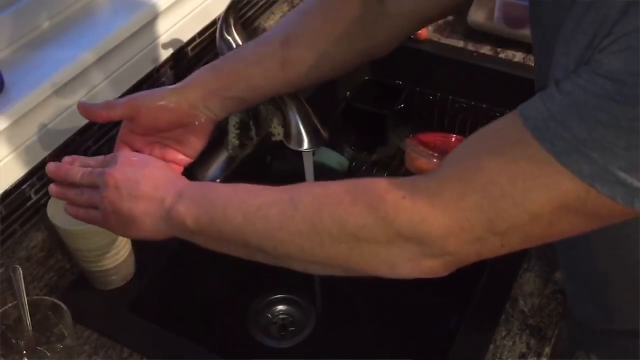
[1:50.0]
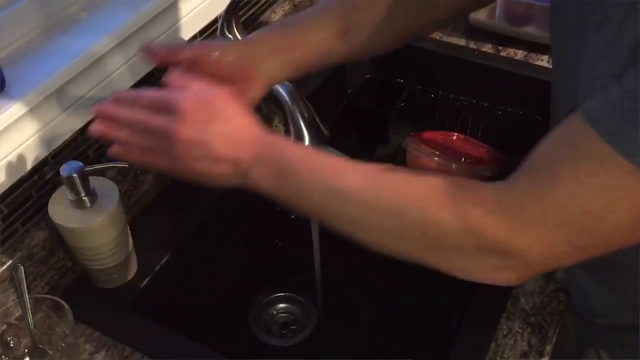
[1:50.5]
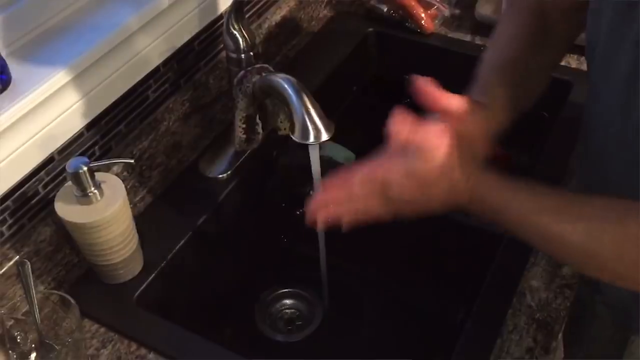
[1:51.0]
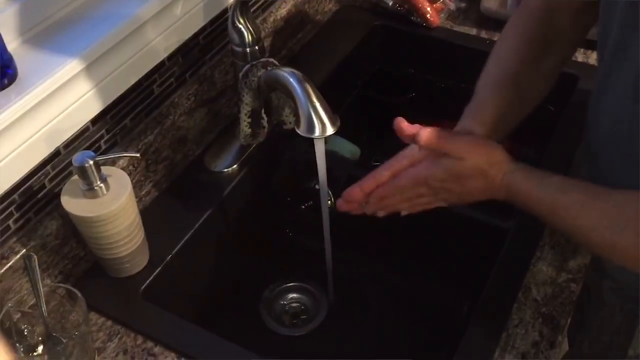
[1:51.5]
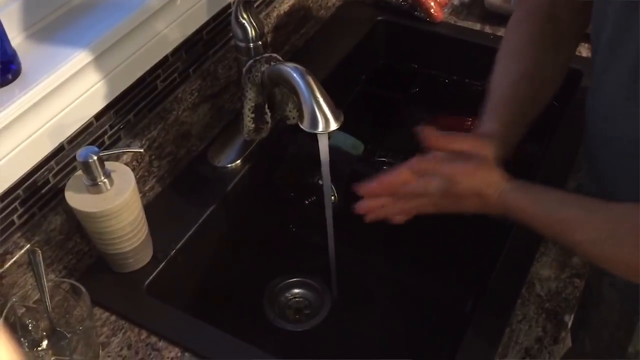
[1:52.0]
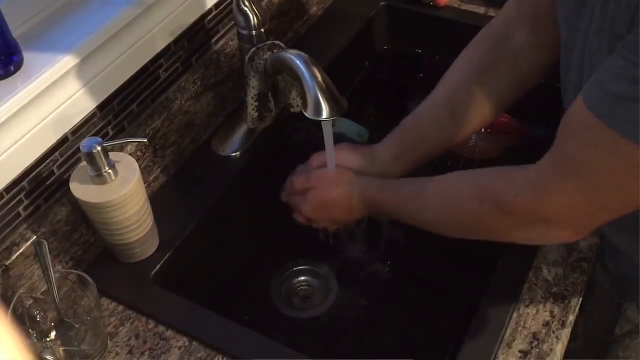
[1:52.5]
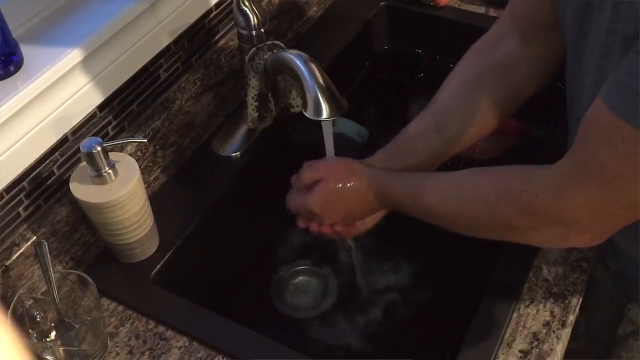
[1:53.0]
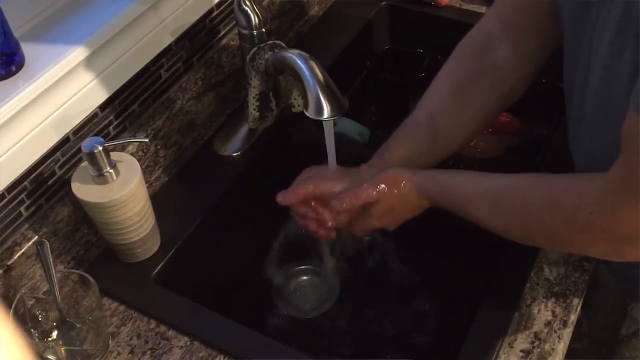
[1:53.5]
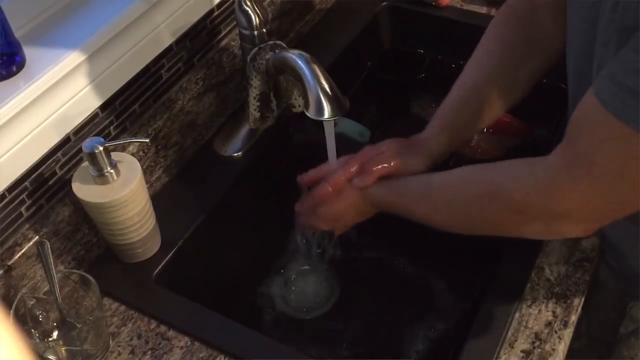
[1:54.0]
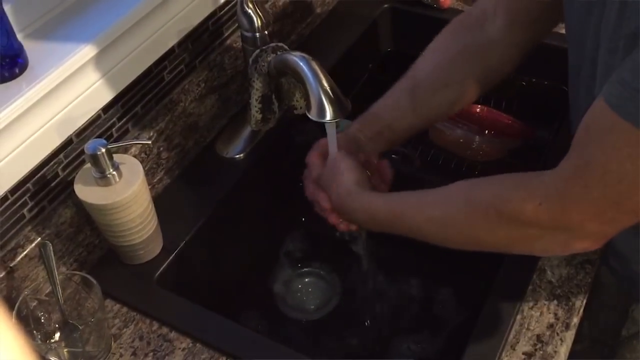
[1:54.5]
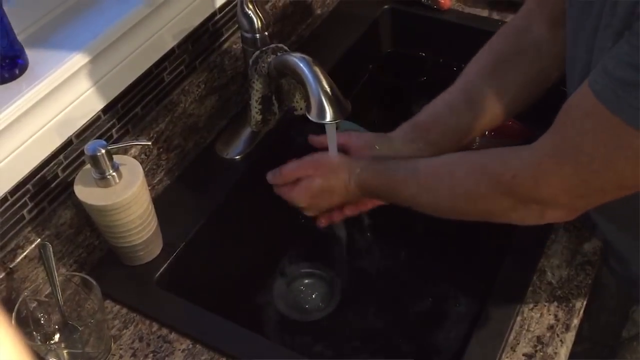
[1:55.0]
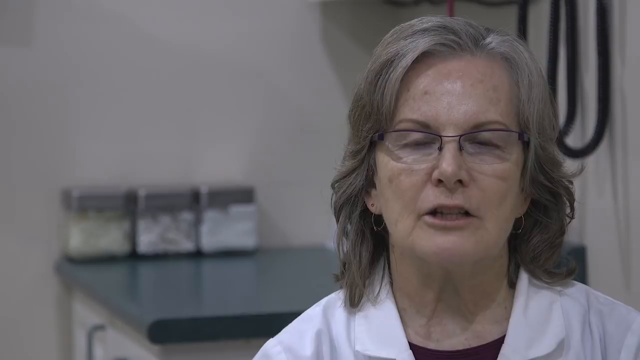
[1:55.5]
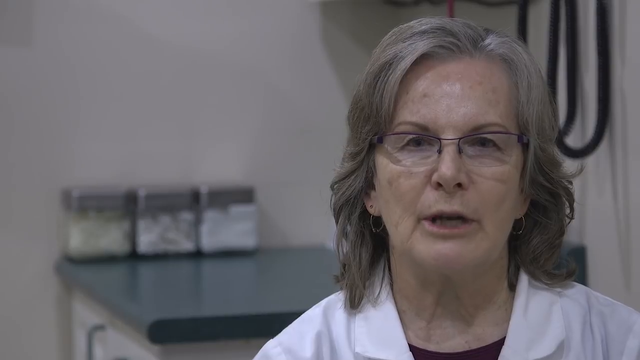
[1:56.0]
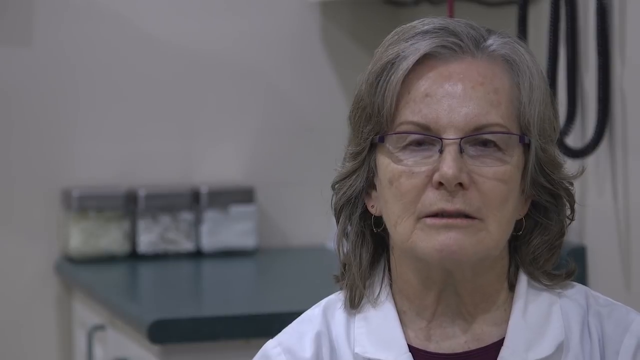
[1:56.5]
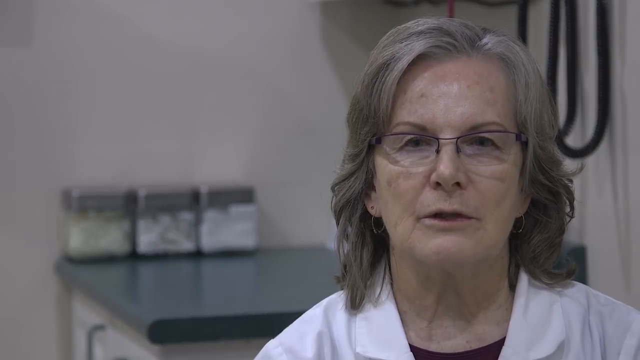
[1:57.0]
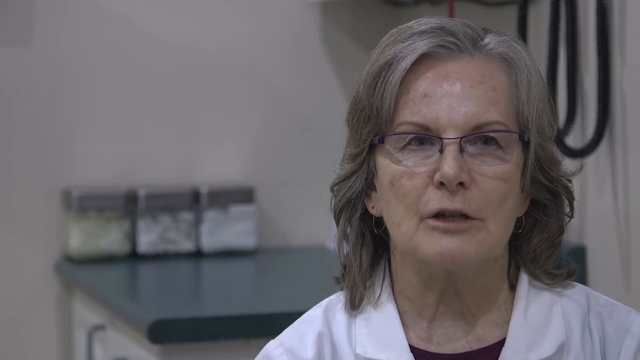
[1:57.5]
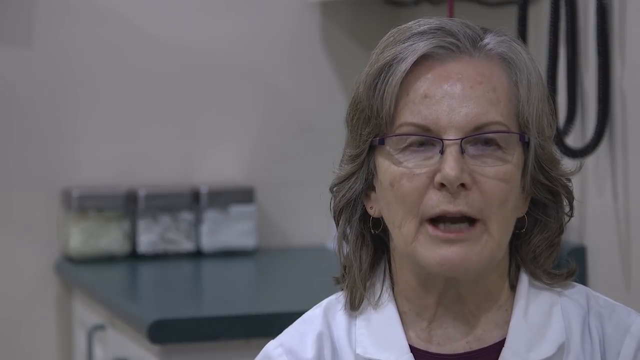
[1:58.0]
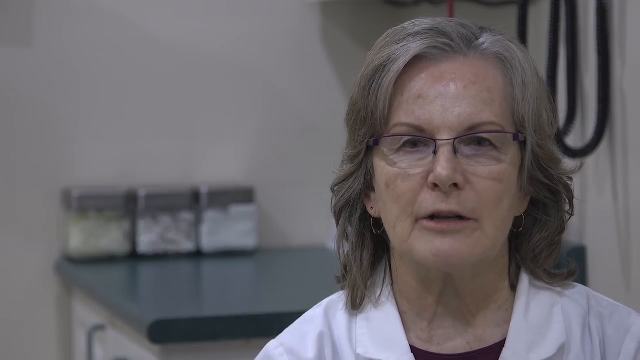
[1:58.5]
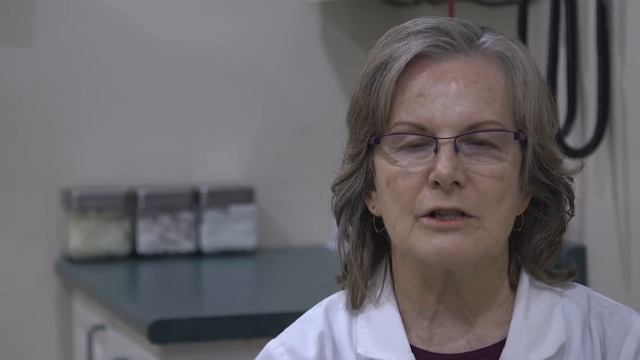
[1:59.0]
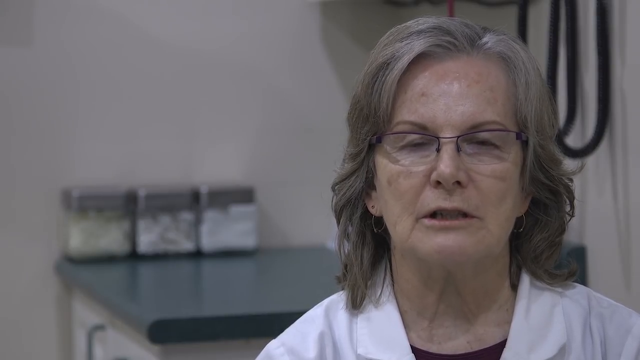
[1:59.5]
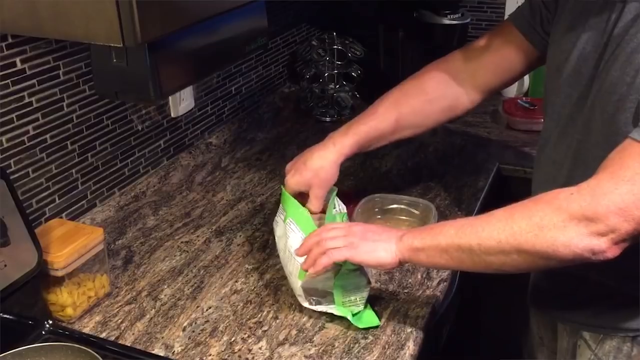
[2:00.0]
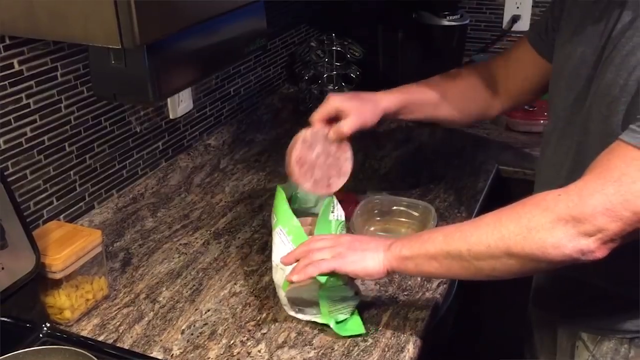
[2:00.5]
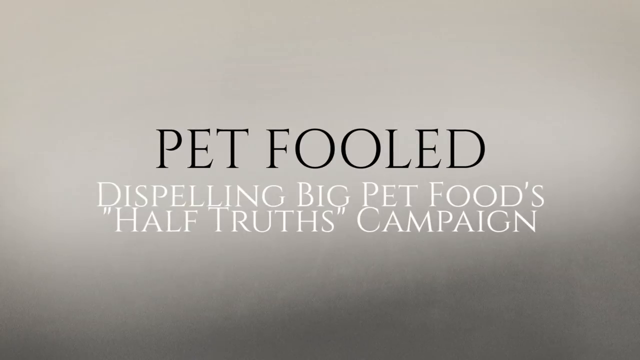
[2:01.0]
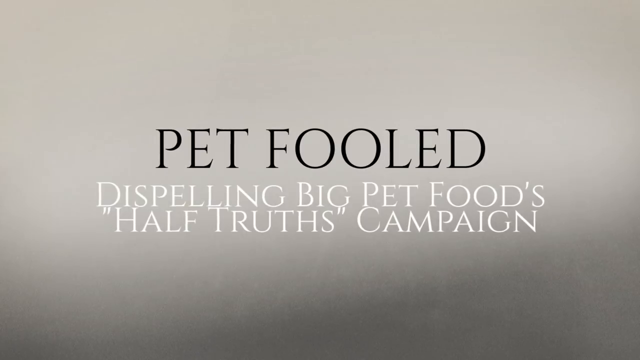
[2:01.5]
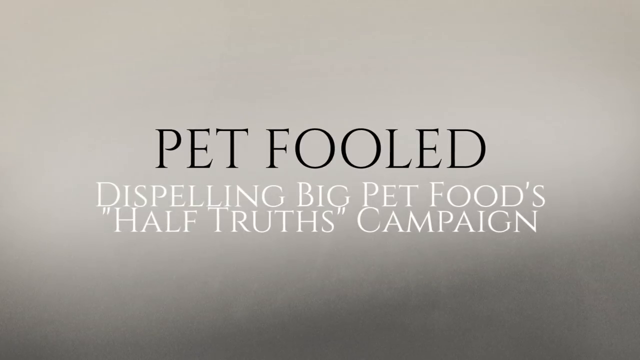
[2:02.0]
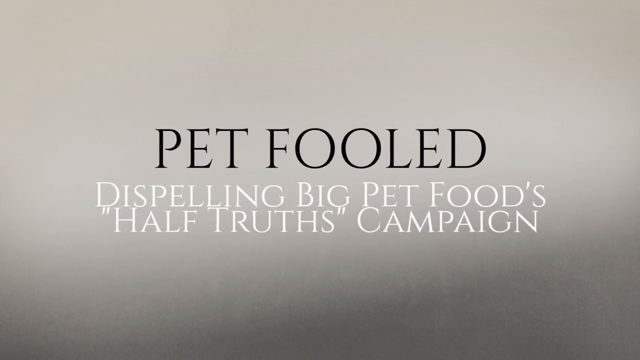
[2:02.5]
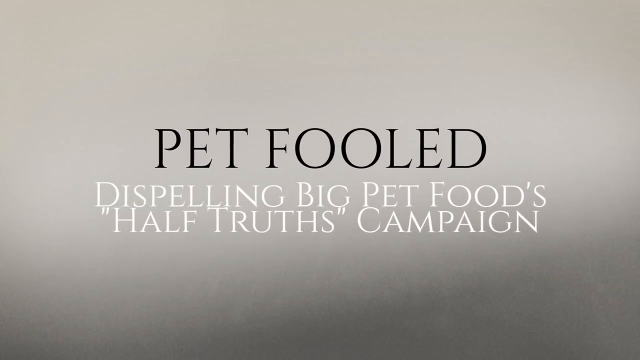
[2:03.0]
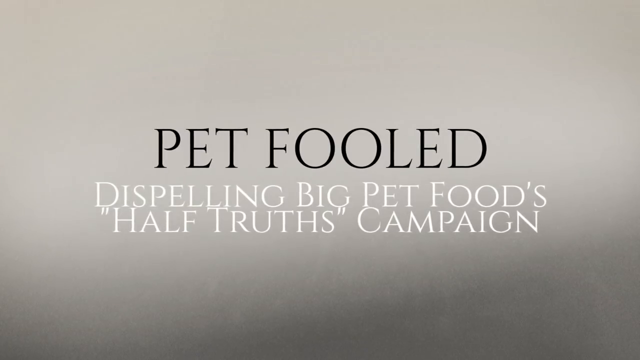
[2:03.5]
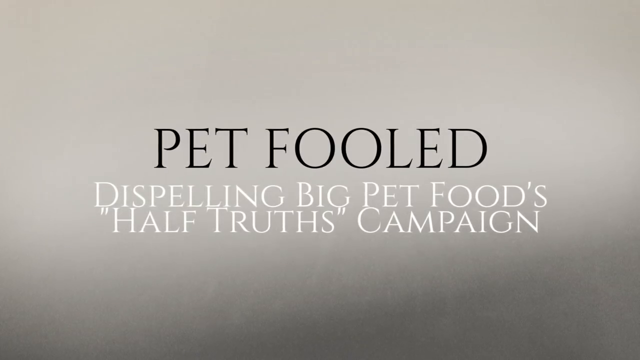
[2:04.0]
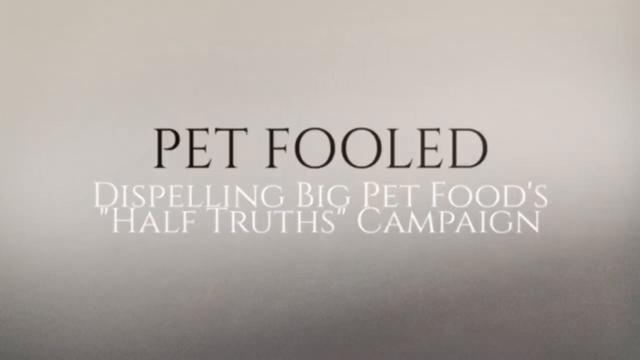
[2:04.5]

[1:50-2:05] The man rubs his hands together for a few seconds, then places them under the running tap in front of him and rinses them, rubbing them together. The doctor appears again, still talking in the same neutral way with little expression. The man who was washing his hands then picks up what appears to be raw meat with his right hand. A plain background follows with "pet fooled" in black lettering and, underneath in white writing, "dispelling big pet foods half-truths campaign." The video then fades out to black. The video is fast paced throughout.